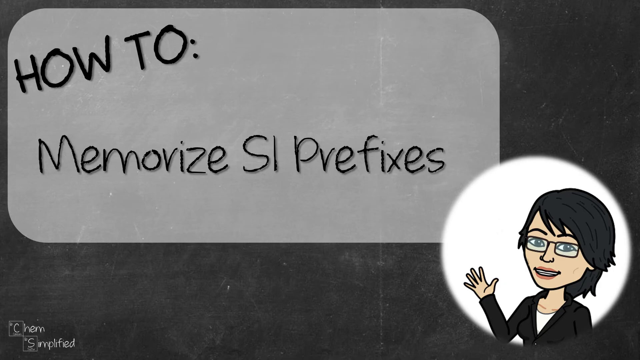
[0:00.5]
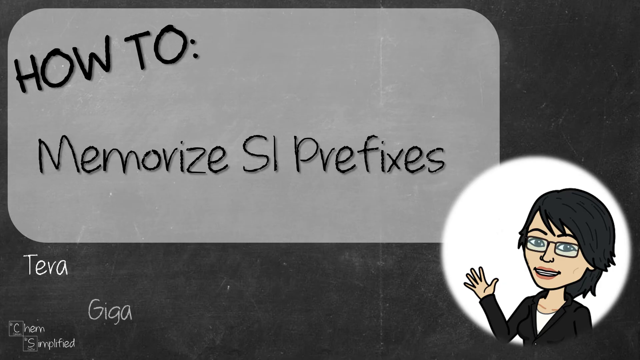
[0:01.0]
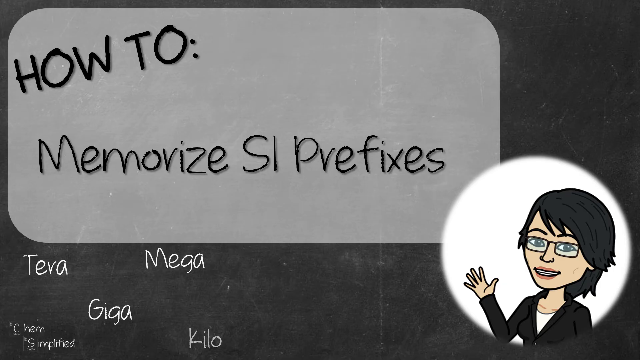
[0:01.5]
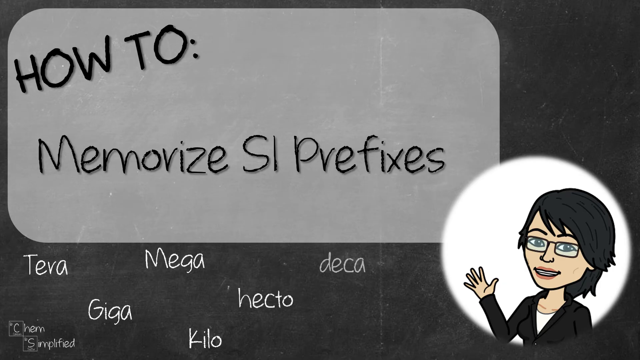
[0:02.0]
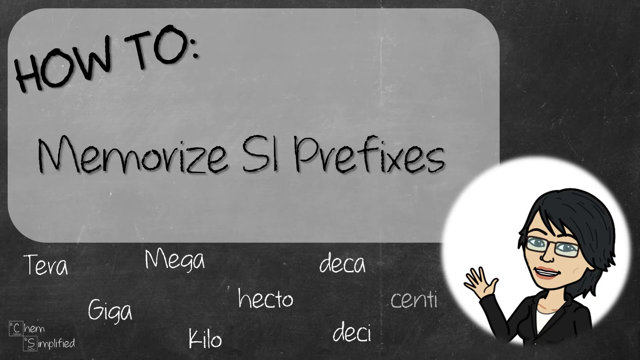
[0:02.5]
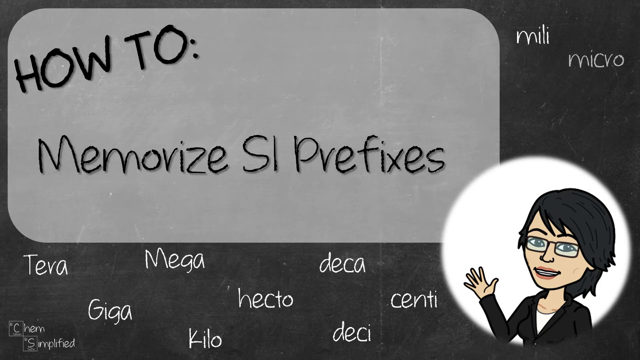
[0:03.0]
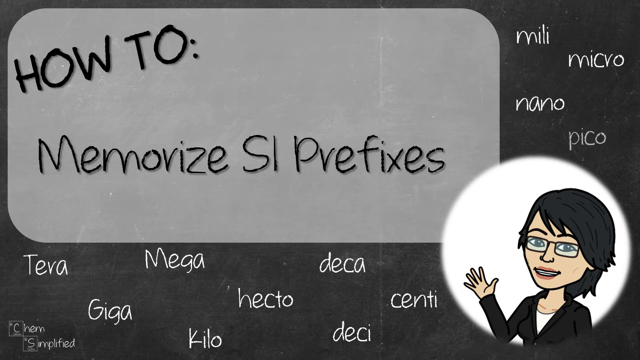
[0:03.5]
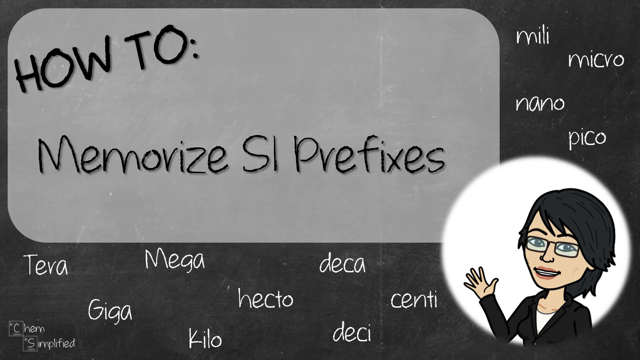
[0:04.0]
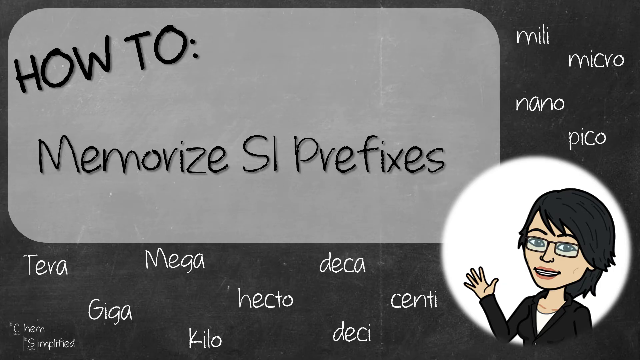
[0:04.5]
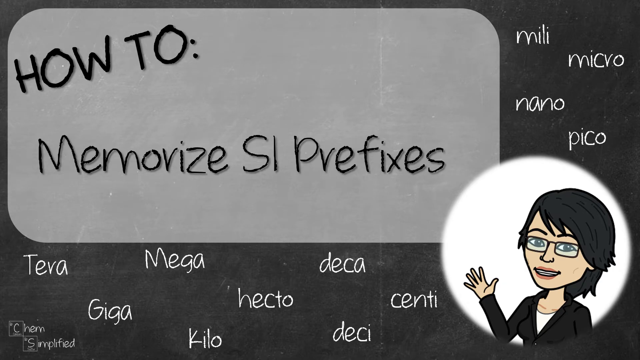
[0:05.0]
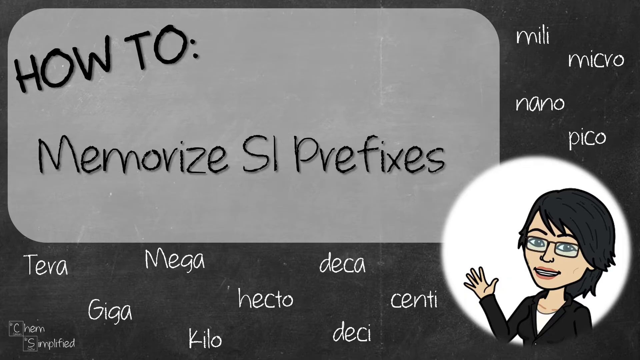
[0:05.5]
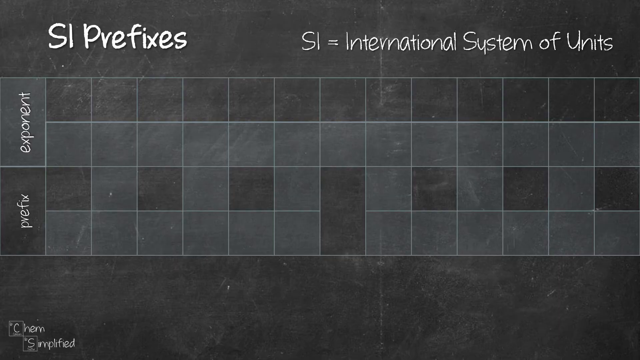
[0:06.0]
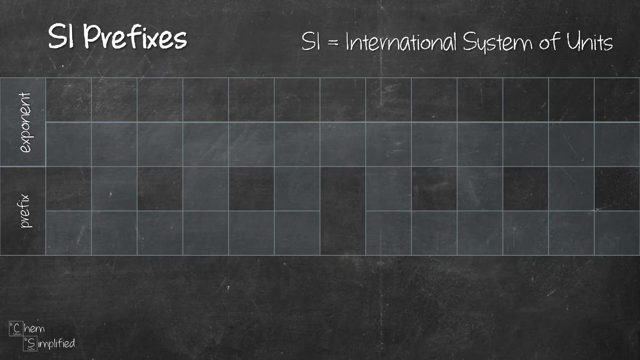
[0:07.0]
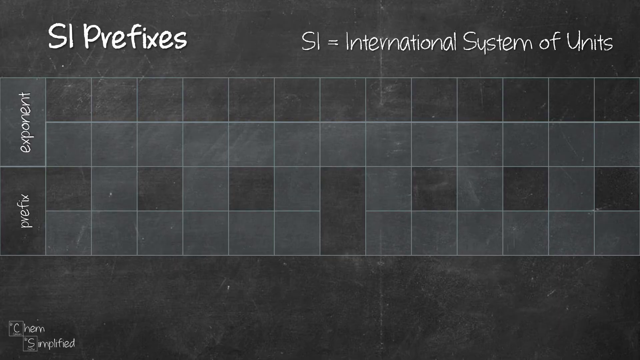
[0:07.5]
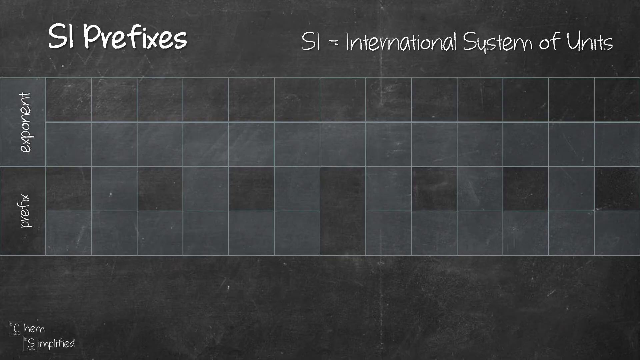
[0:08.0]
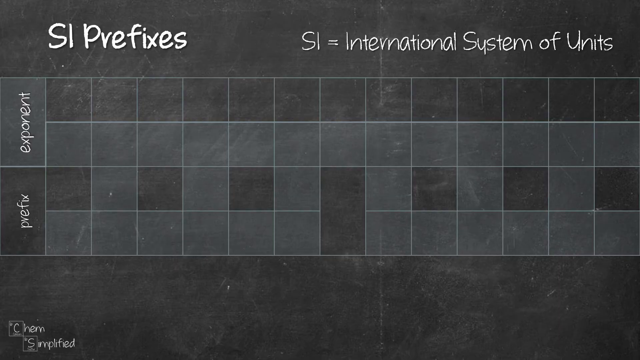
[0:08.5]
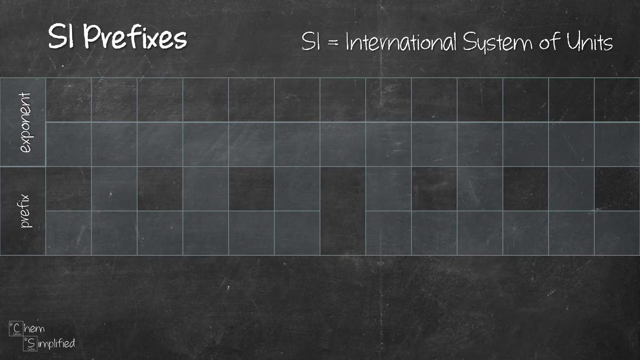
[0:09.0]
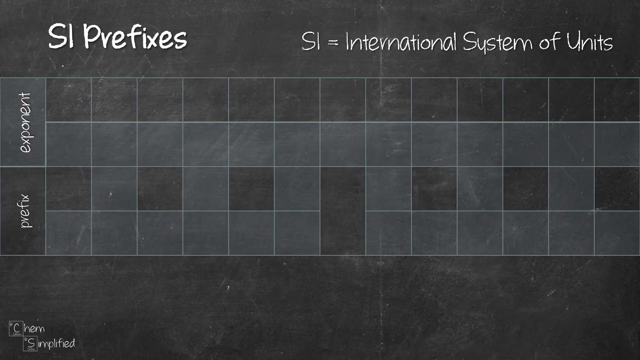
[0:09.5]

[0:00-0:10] The background looks like a picture of a chalkboard. A rounded rectangle box reads "how to" on a slant, with "memorize SI prefixes" centered below it. A circular graphic shows a bitmoji of a woman with short black hair and glasses, wearing a black blazer over a white tank top. Words appear all around the screen: "tera", "mega", "hecto", "deca", "centi", "milli", "micro", "nano" and "pico". The next screen reads "SI prefixes" and "SI = international system of units", and a graph system now appears on the chalkboard. Its top box says "exponent" and its bottom box says "prefix". Some boxes are kind of grayed out, while others are not.